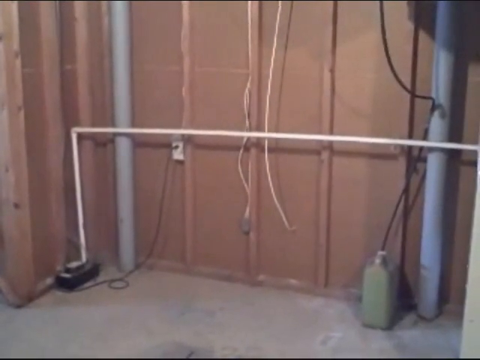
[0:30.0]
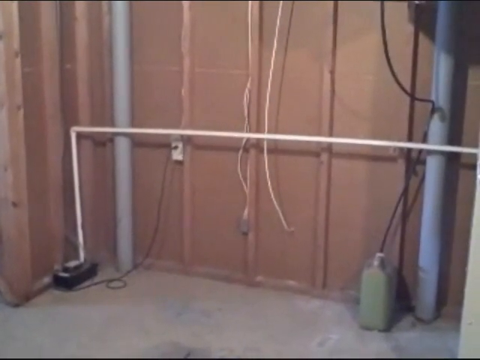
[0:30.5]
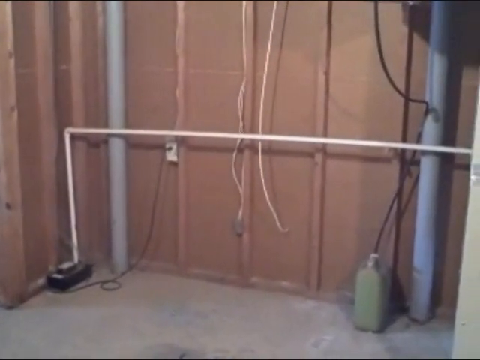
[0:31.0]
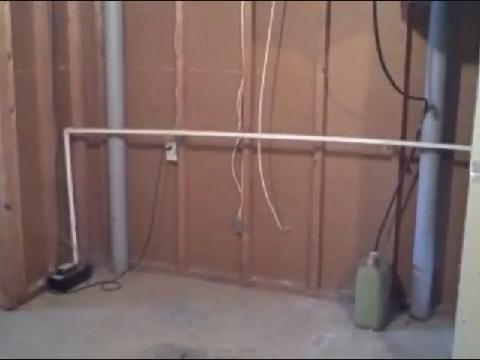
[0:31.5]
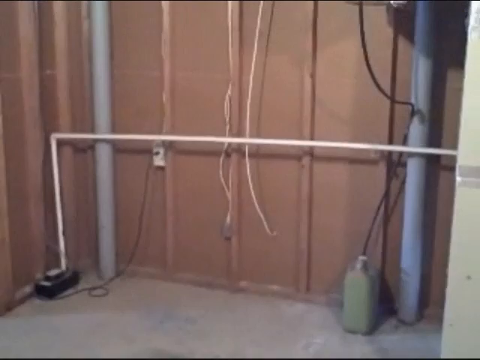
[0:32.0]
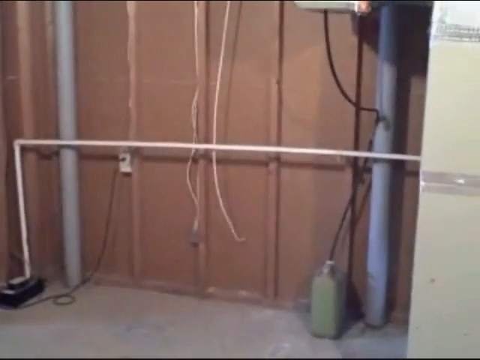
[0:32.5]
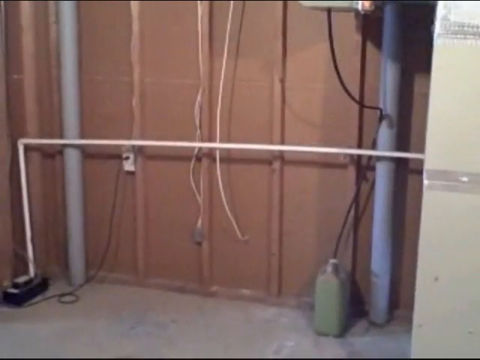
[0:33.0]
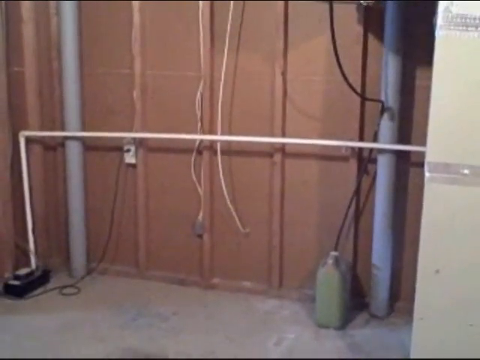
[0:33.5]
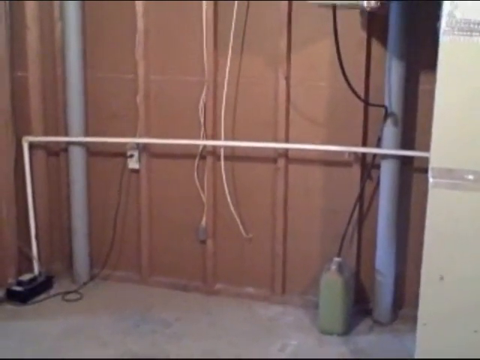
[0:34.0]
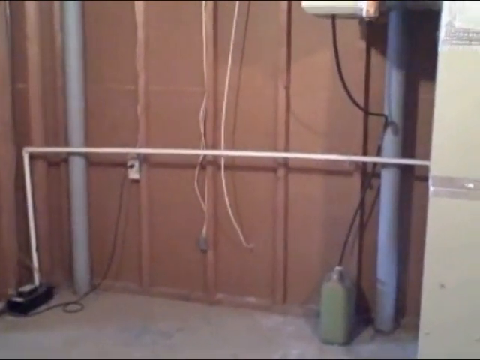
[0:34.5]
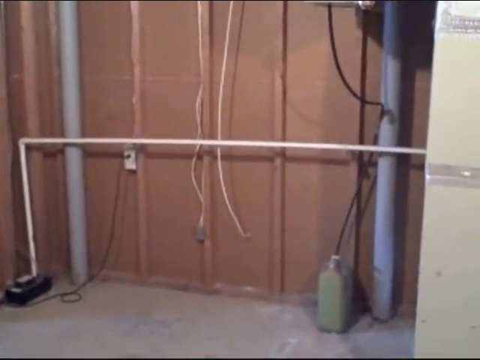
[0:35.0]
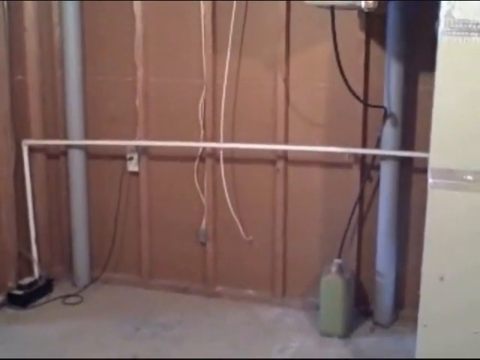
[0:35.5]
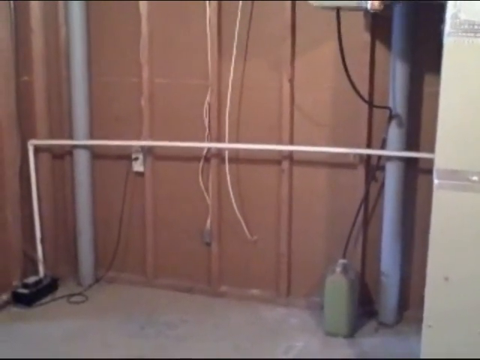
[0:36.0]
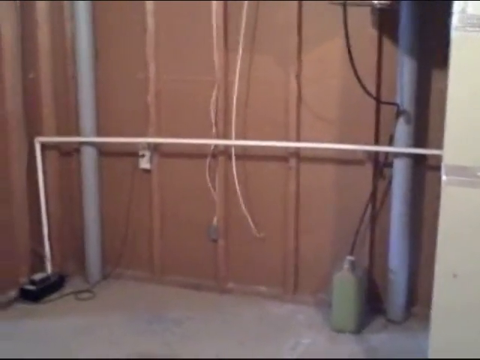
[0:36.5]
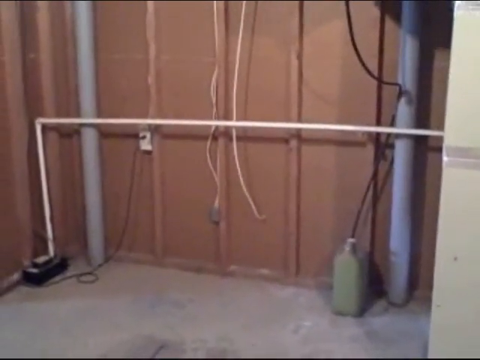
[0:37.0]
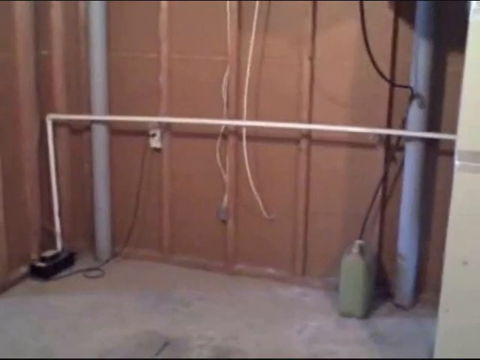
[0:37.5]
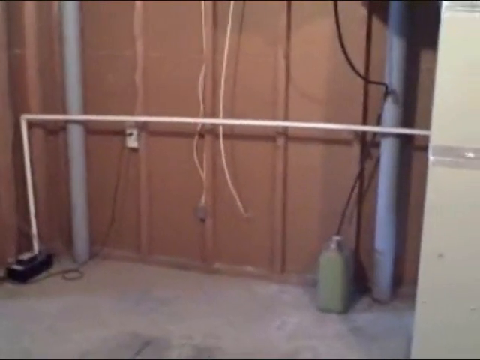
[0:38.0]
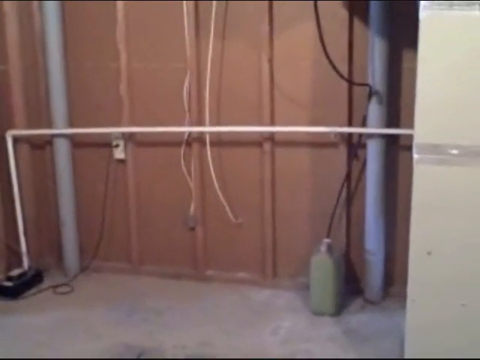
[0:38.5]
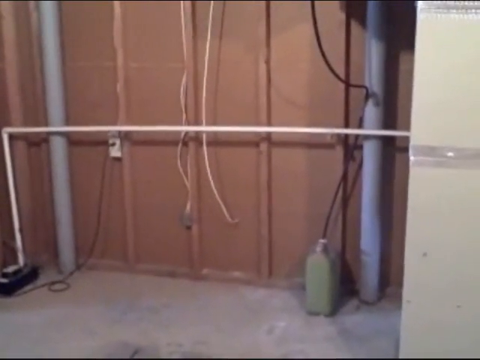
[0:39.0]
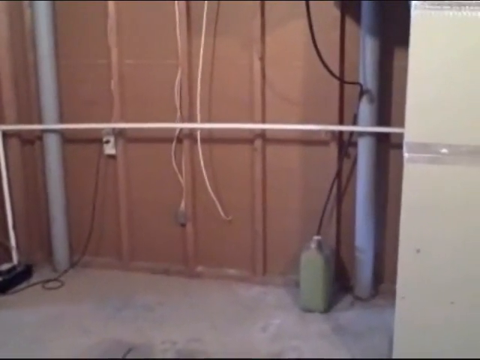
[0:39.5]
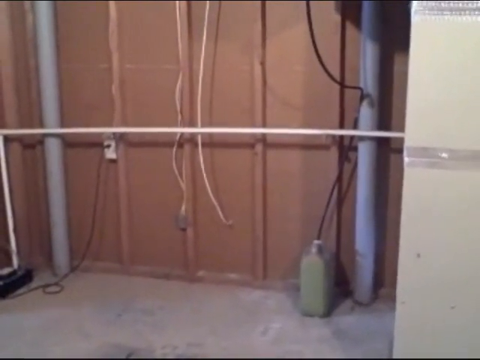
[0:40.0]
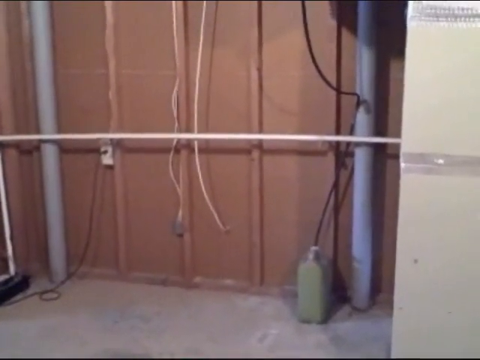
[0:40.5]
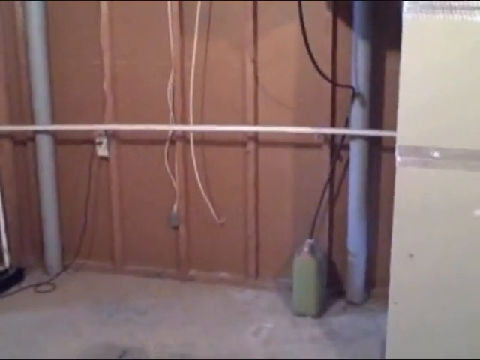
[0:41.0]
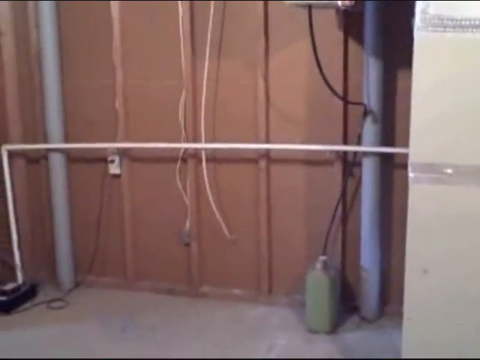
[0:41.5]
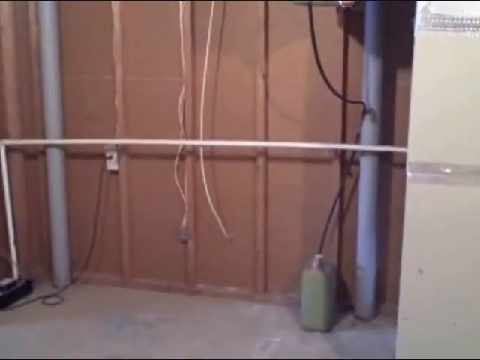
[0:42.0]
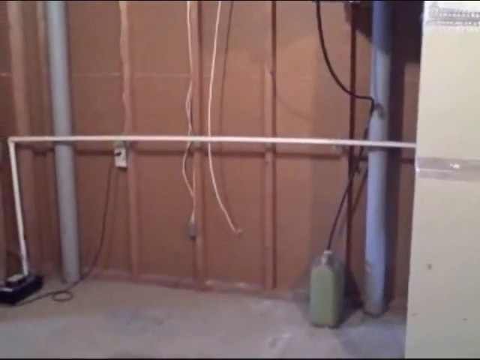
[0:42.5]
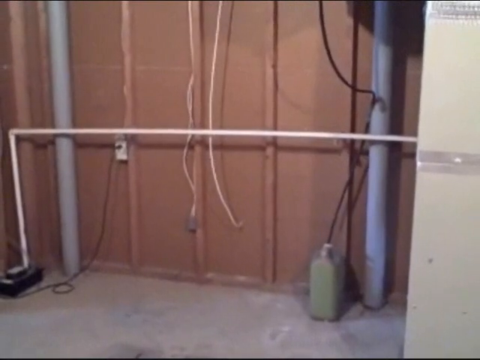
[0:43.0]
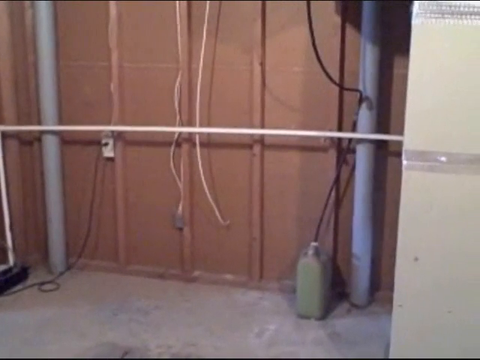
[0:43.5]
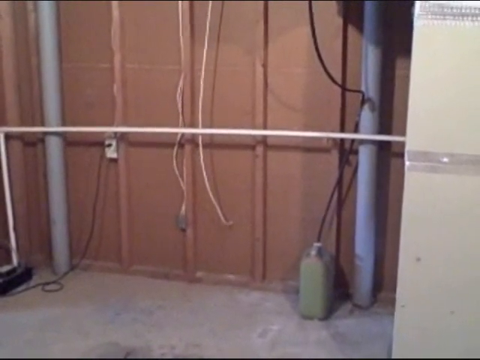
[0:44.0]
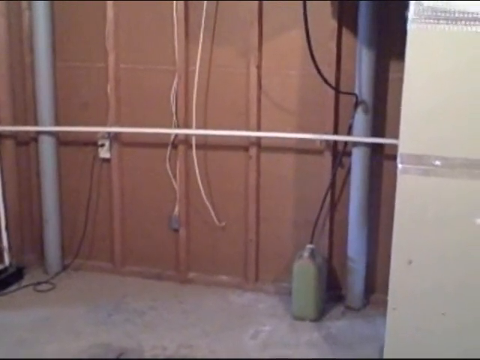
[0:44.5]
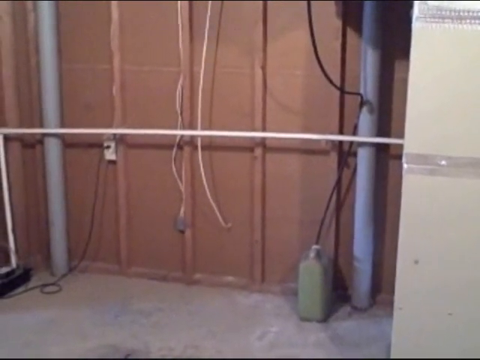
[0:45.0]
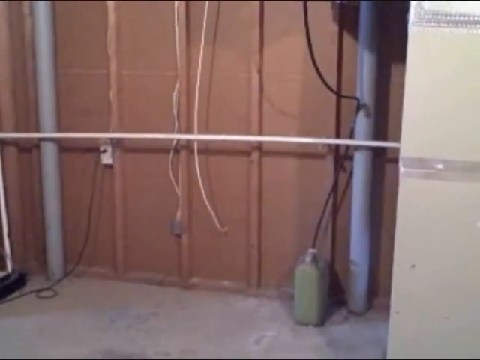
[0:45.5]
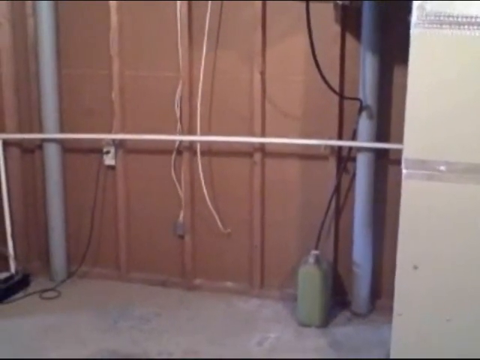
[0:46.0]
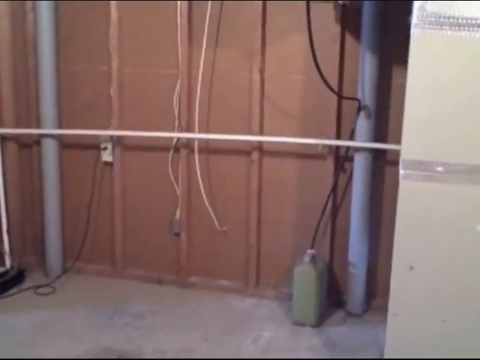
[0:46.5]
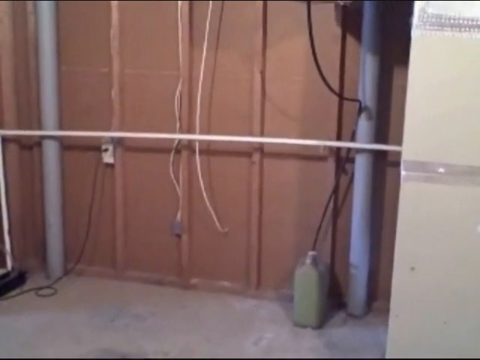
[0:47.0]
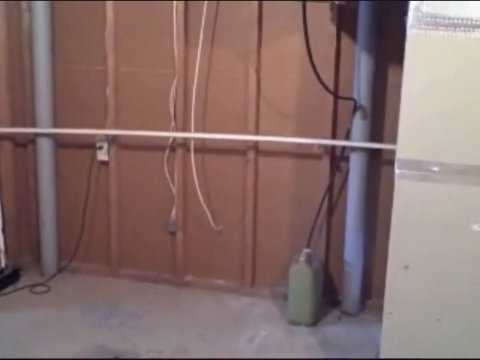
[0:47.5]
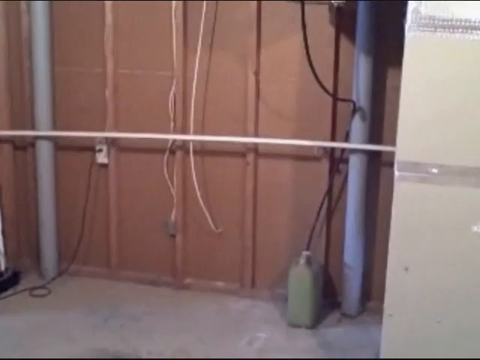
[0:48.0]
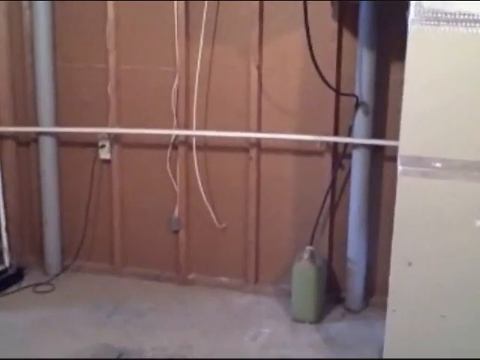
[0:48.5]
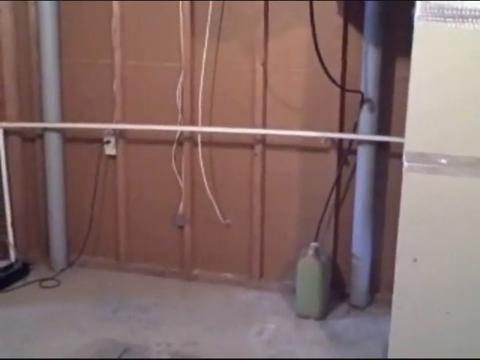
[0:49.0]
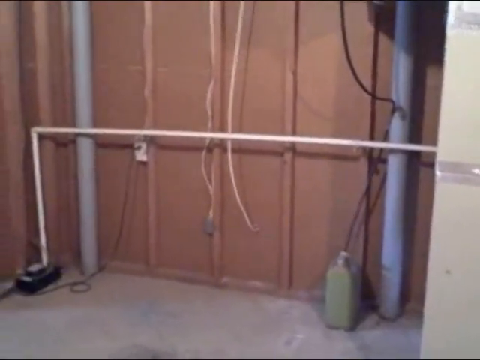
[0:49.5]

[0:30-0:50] A shaking camera films a small room with a red foreground; along the sides appear to be cardboard boxes. There is some wire and a plug, a green gas canister, two gray poles, and a white wire that seems to be cut and disconnected. The person filming shakes the camera violently, and the video is low quality. On top of the green gas canister is something that may be a box, and to the side are some brown boxes, apparently with tape on them. The flooring is gray, and on the left side there is possibly a door of some sort, or just an open space, next to the black plug box.